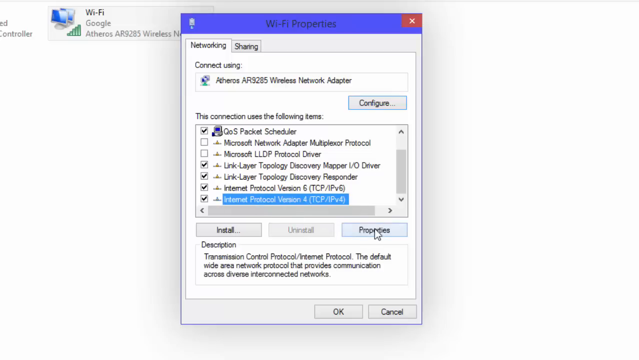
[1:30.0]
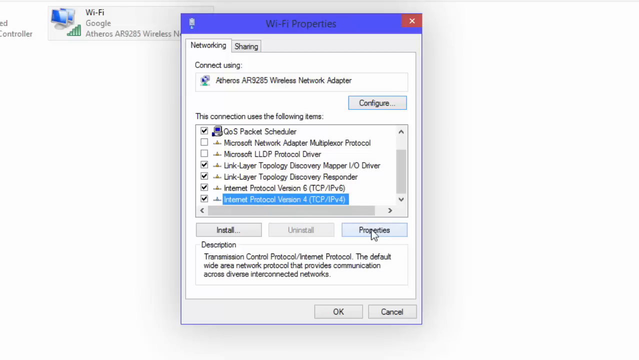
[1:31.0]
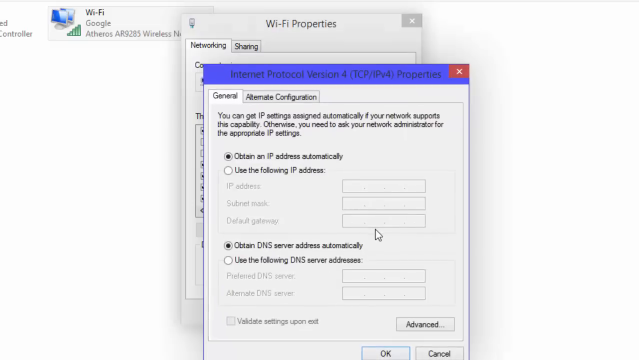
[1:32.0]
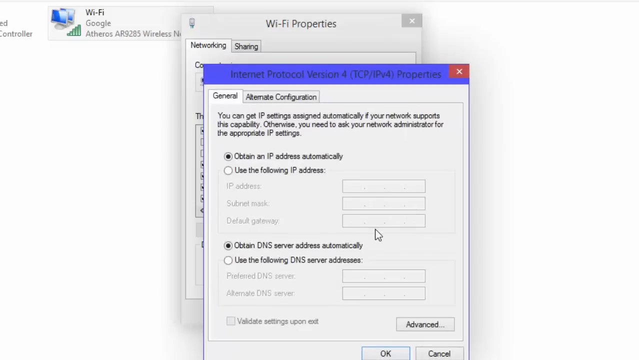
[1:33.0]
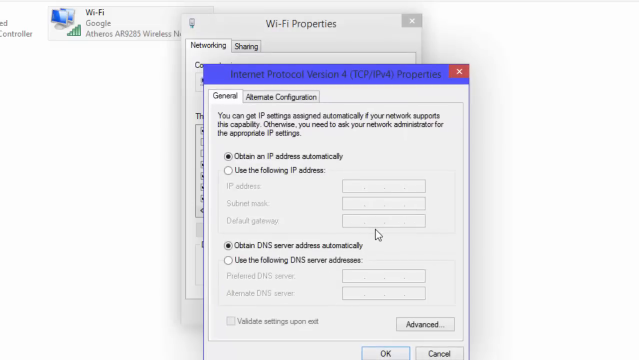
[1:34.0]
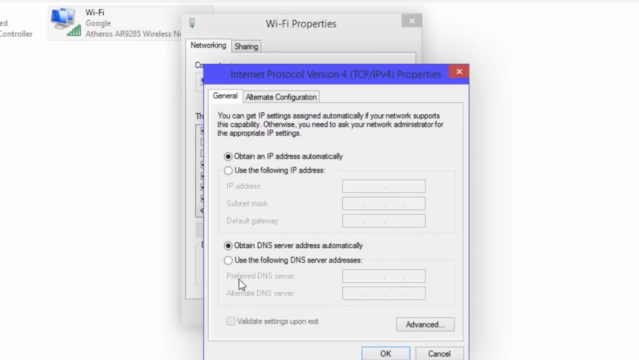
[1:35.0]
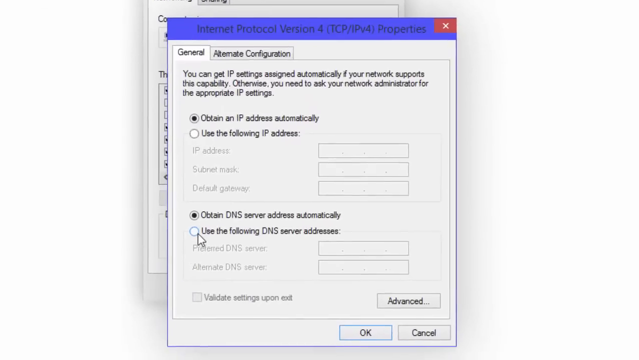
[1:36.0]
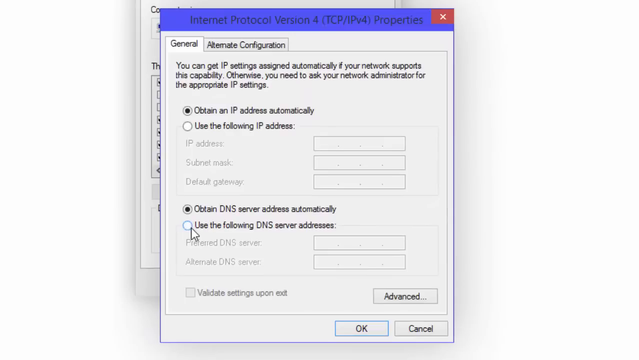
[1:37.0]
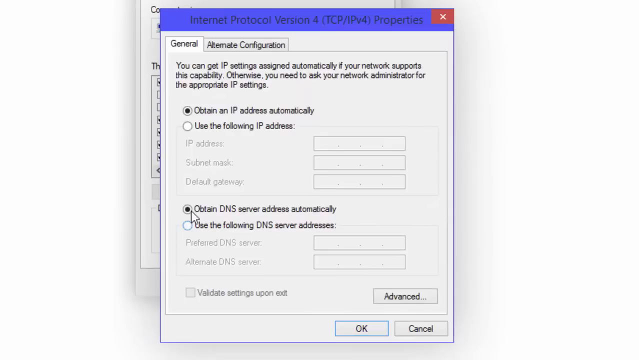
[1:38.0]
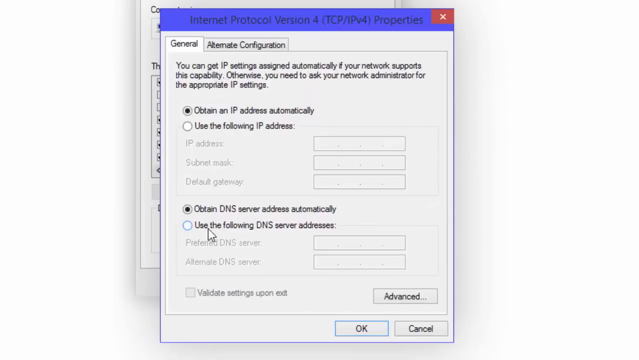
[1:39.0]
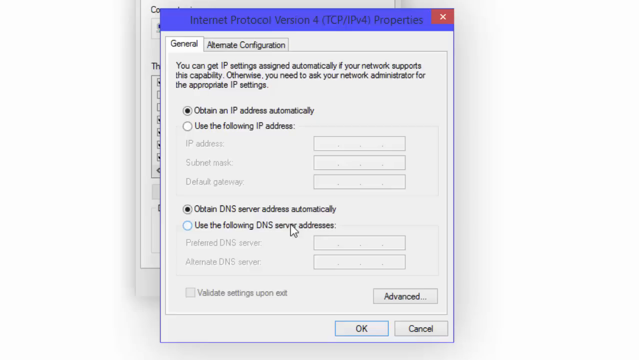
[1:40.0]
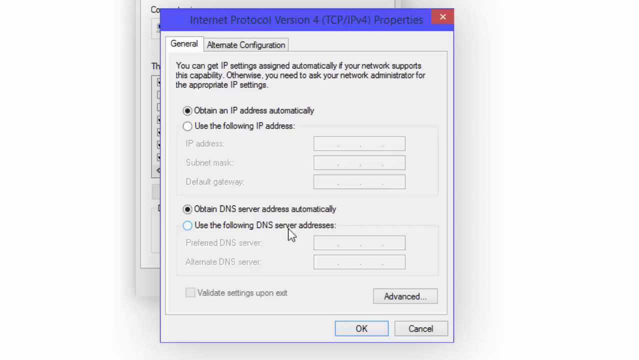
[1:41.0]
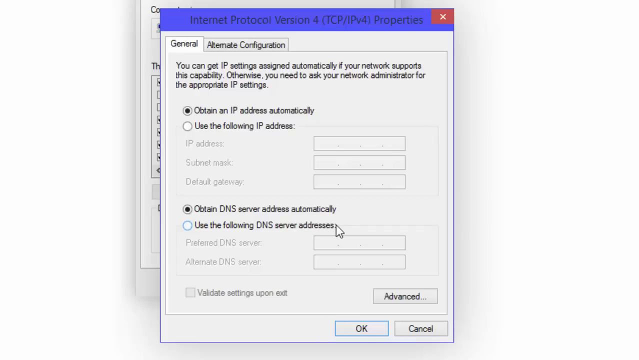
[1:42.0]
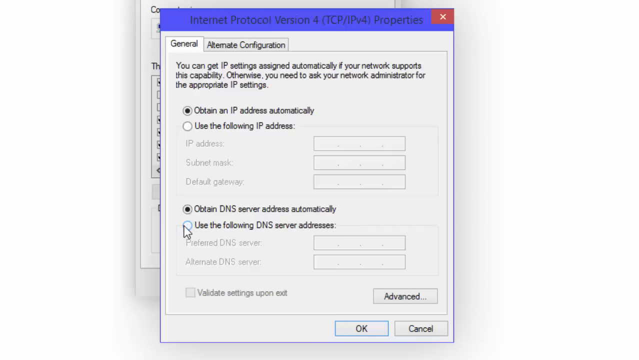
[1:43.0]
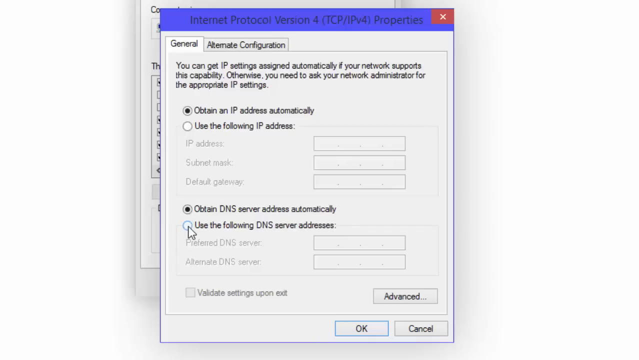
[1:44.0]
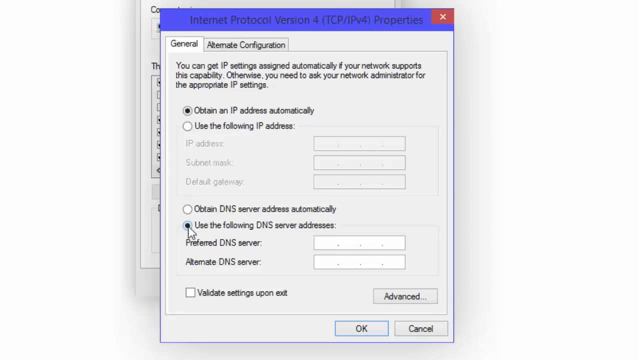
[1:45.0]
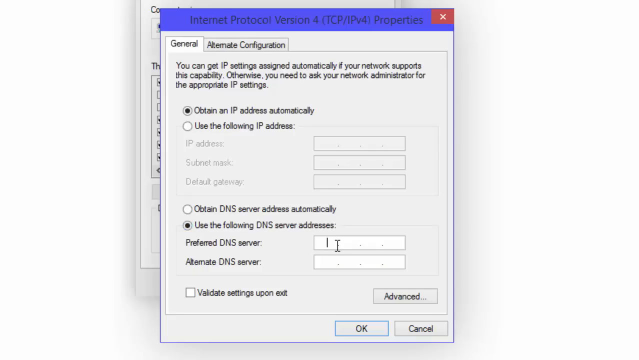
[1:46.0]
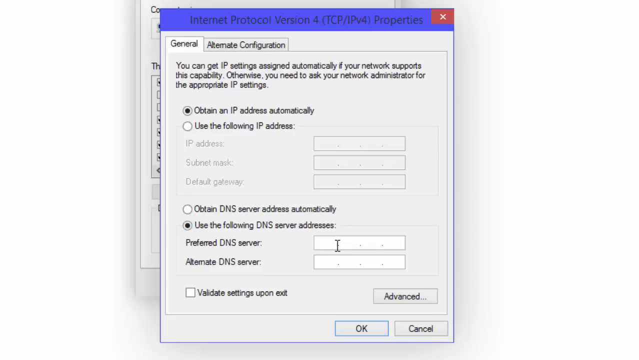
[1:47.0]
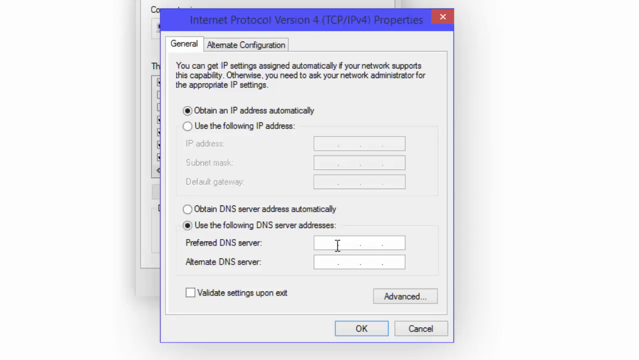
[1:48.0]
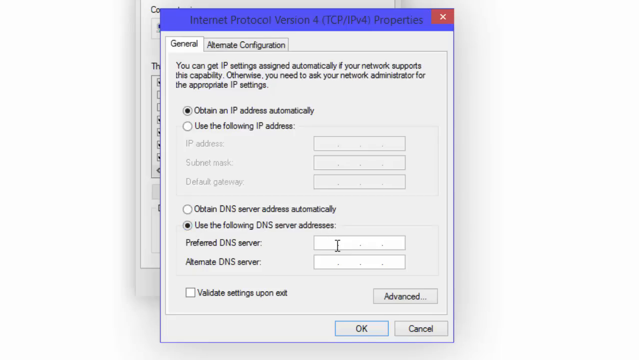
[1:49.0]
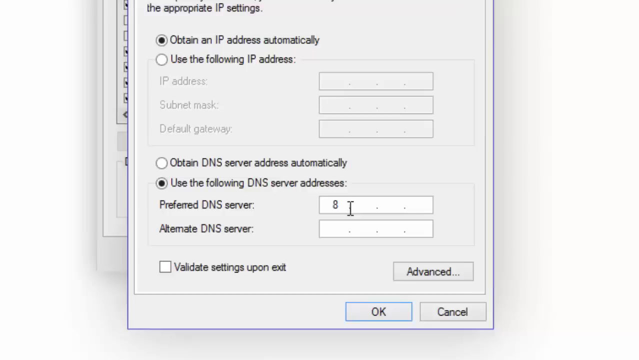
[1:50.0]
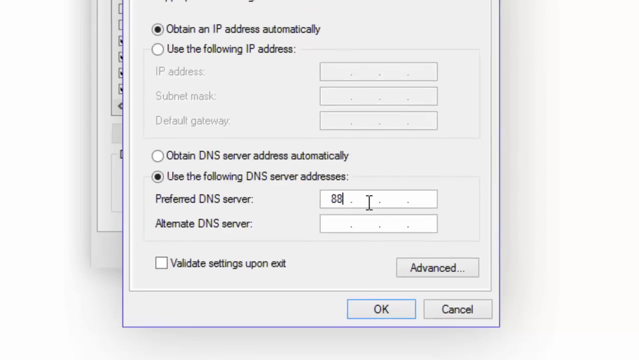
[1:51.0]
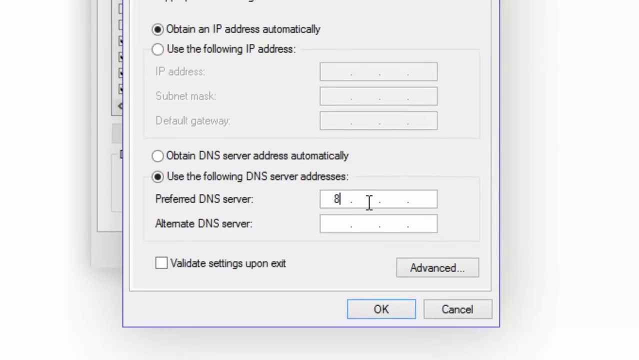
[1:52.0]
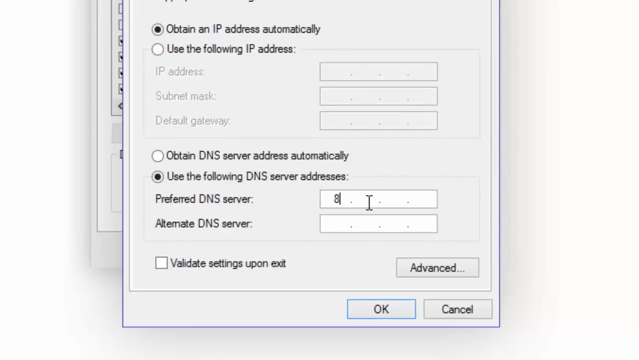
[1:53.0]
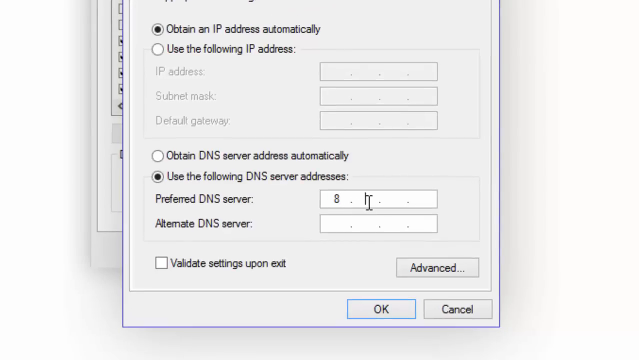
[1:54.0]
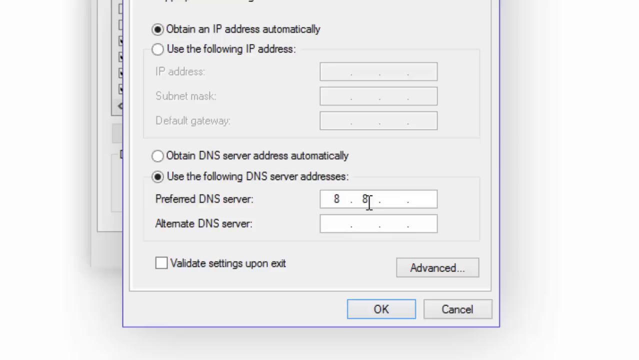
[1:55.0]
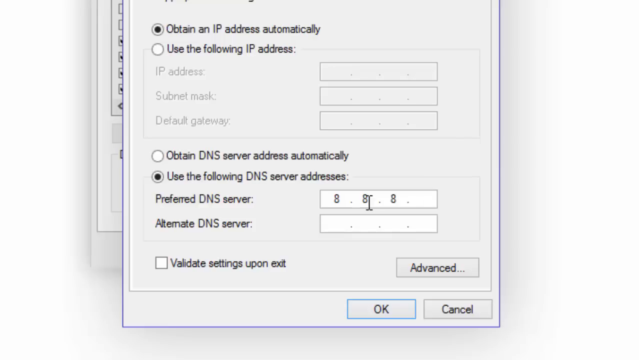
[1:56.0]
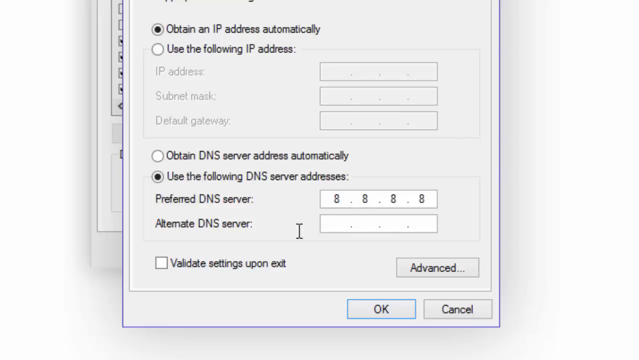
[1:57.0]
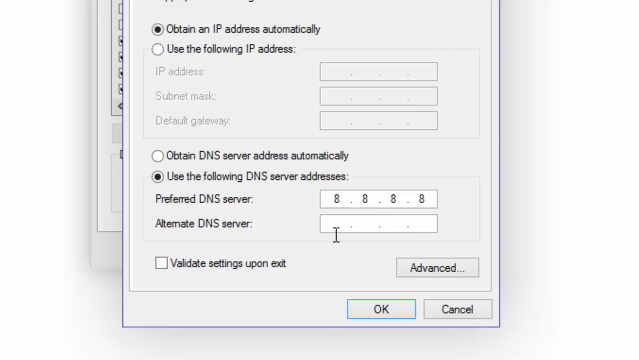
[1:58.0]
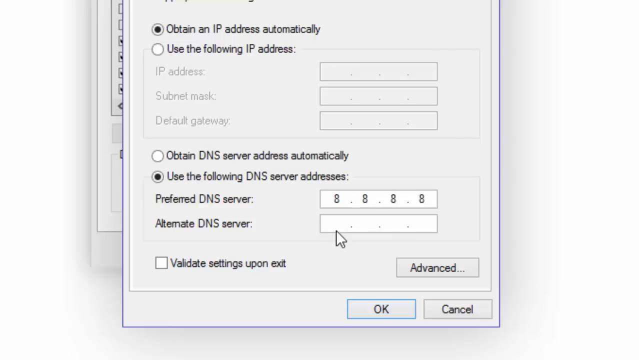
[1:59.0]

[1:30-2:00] The user selects the Internet Protocol Version 4 option, which highlights it blue, then clicks the button labeled Properties below. This brings up the Internet Protocol Version 4 properties with the General tab highlighted. It says "you can get IP settings assigned automatically if your network supports this capability. Otherwise, you need to ask your network administrator for the appropriate IP settings." There are two sections, one for how to obtain the IP address and one for how to obtain DNS. In the first, obtain an IP address automatically is selected; in the second, obtain DNS server address automatically is selected. The mouse moves back and forth, hovering over the option that says "use the following DNS server addresses," then hovers over the radio button next to it and clicks it to enable custom DNS.